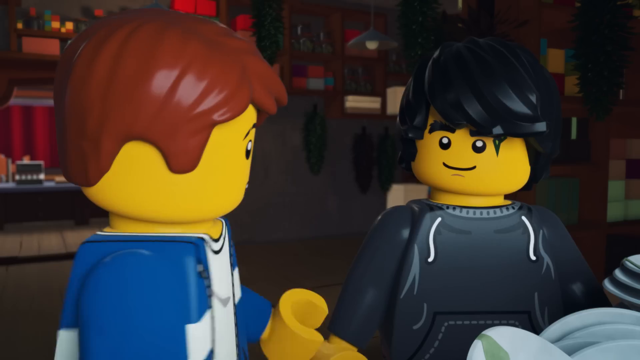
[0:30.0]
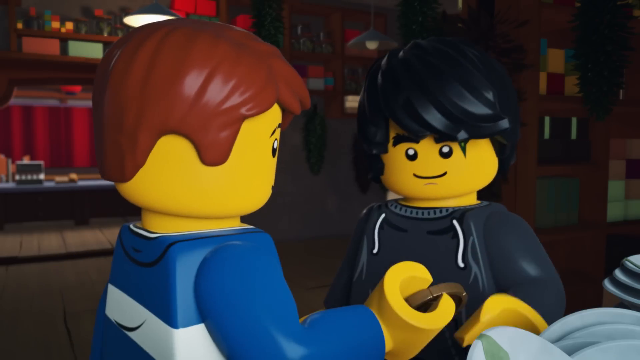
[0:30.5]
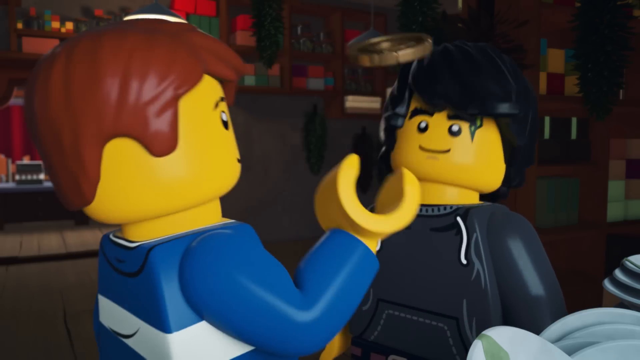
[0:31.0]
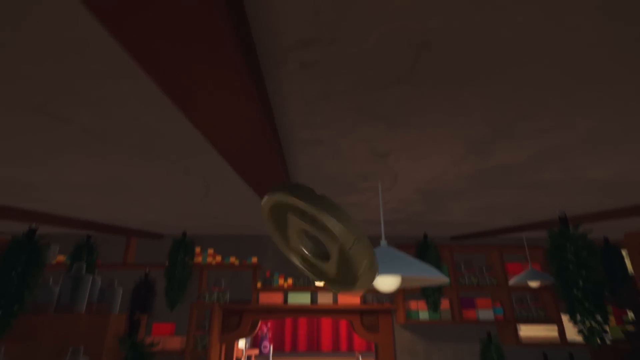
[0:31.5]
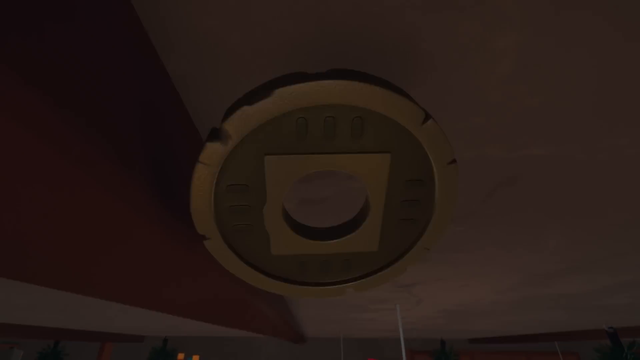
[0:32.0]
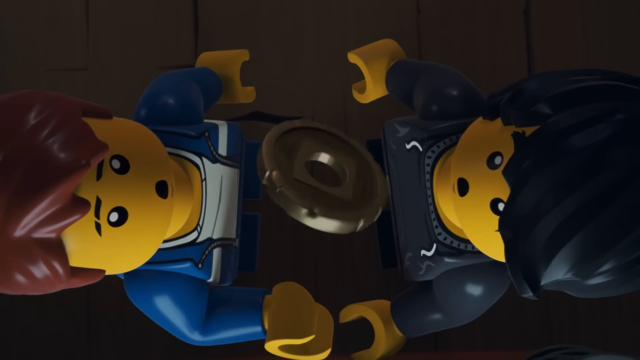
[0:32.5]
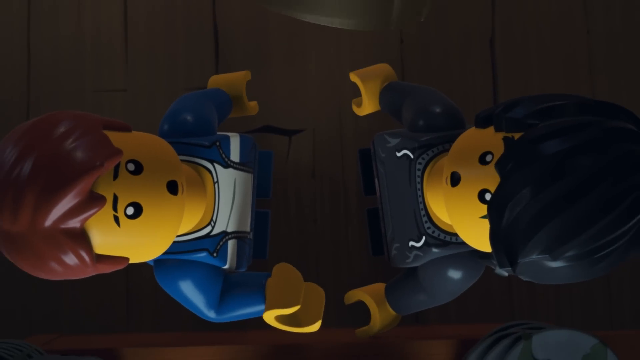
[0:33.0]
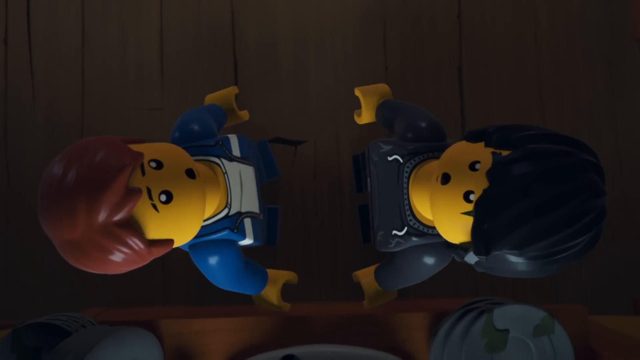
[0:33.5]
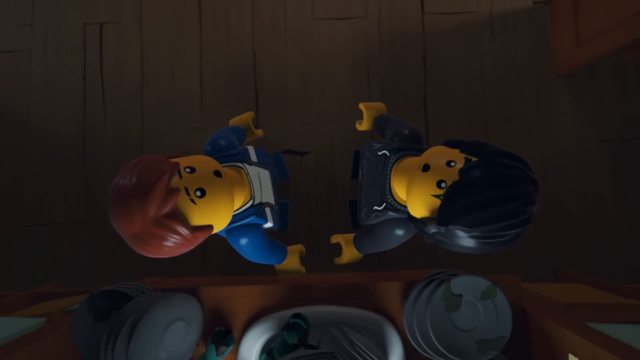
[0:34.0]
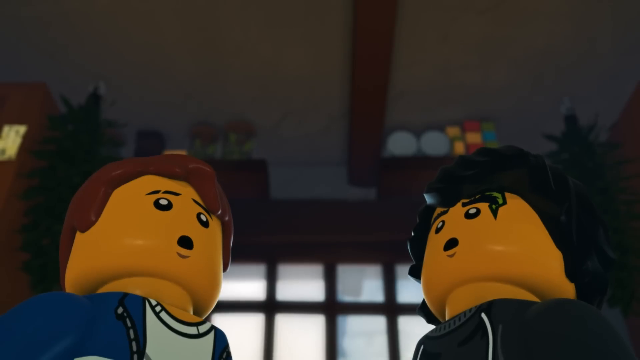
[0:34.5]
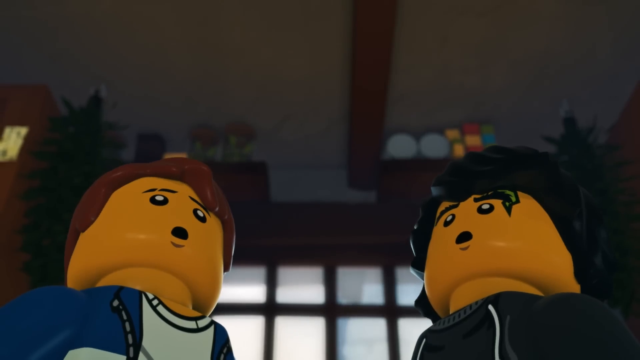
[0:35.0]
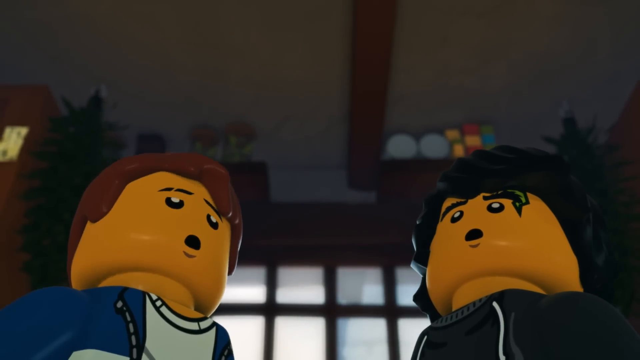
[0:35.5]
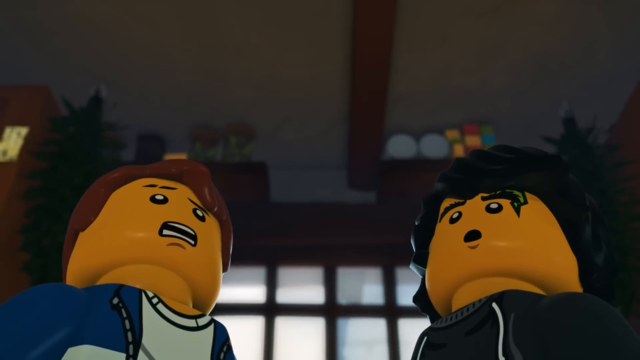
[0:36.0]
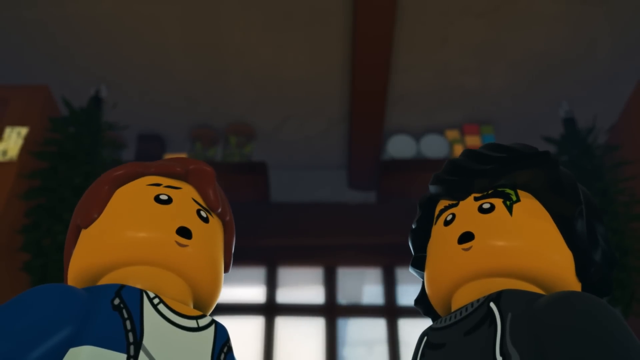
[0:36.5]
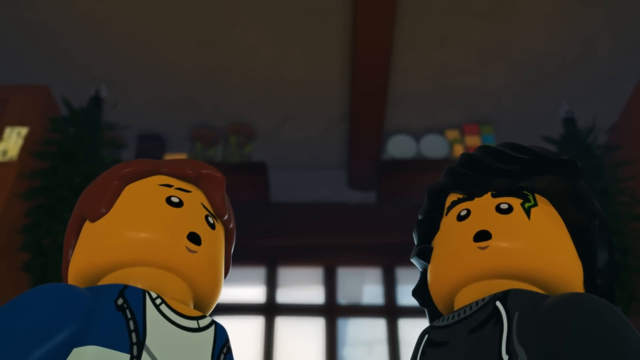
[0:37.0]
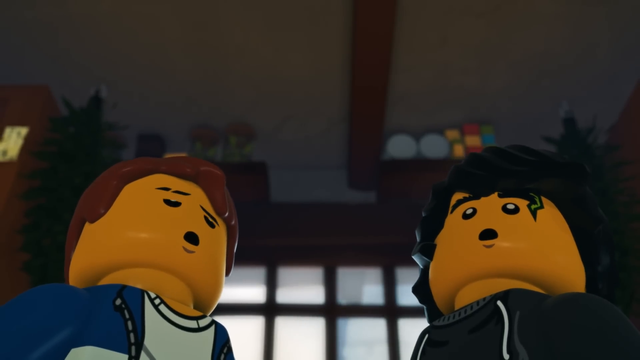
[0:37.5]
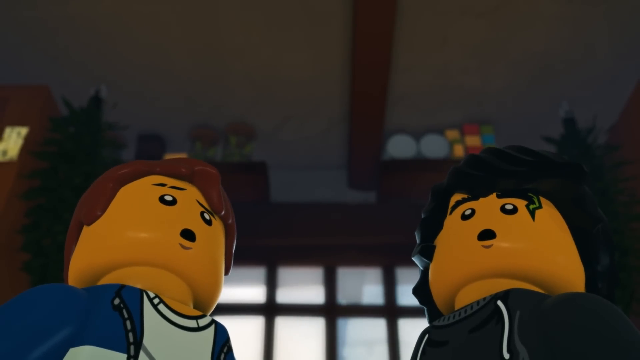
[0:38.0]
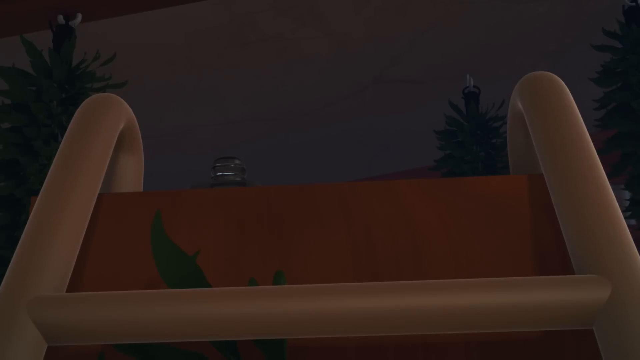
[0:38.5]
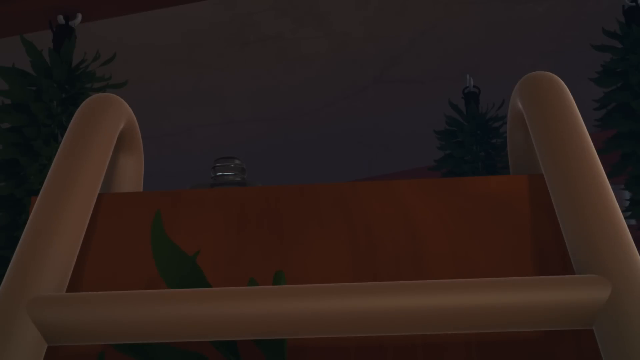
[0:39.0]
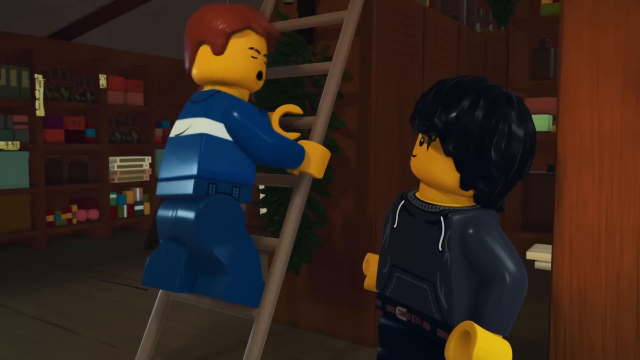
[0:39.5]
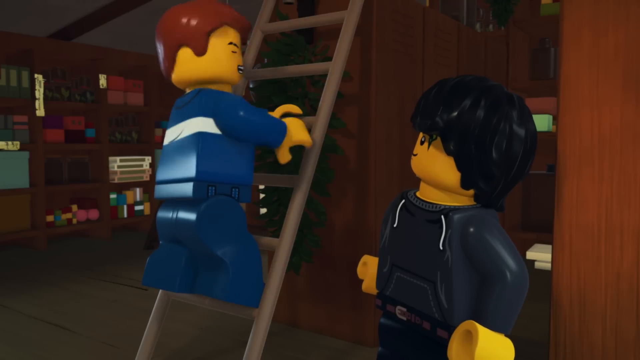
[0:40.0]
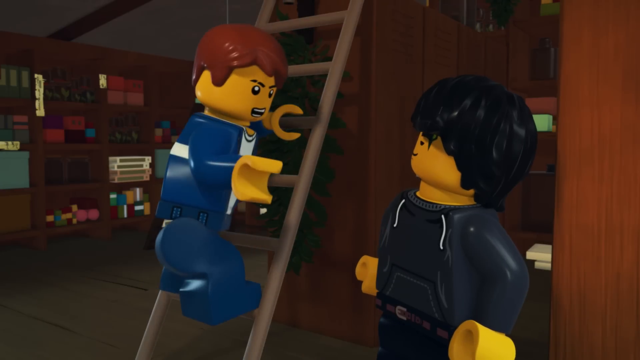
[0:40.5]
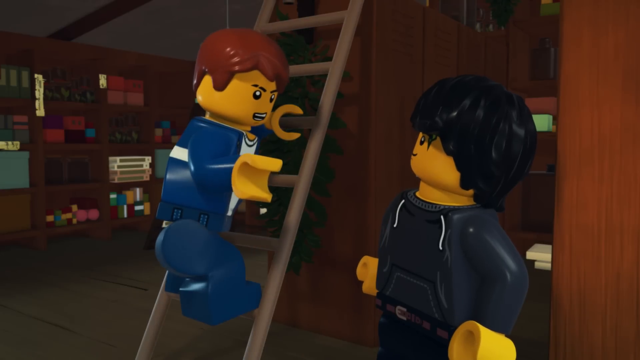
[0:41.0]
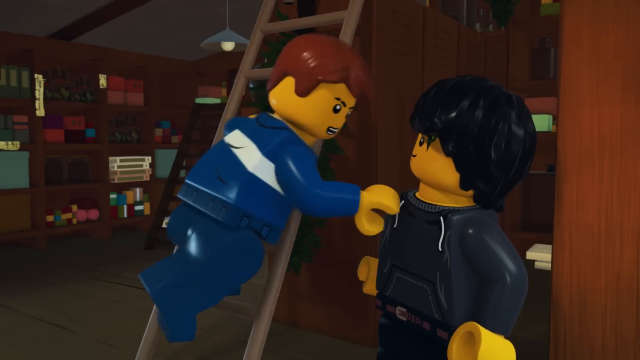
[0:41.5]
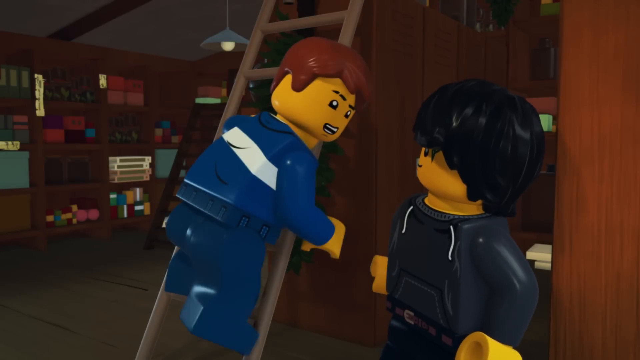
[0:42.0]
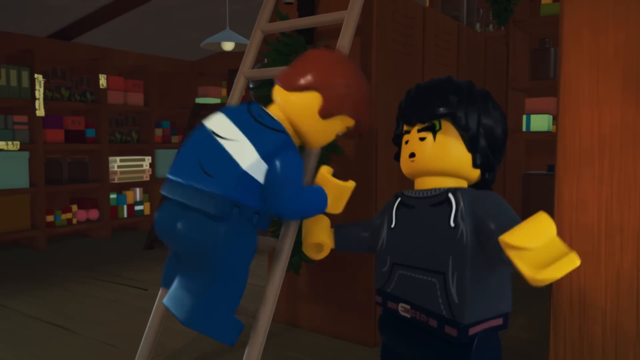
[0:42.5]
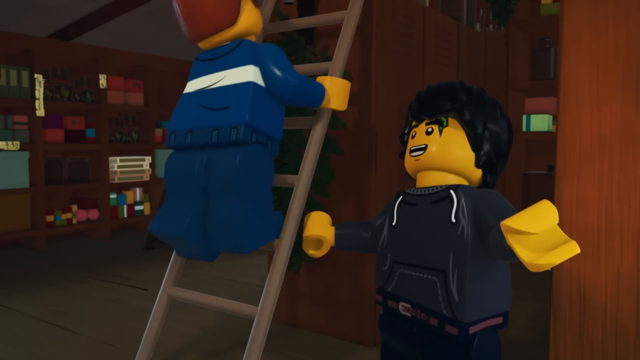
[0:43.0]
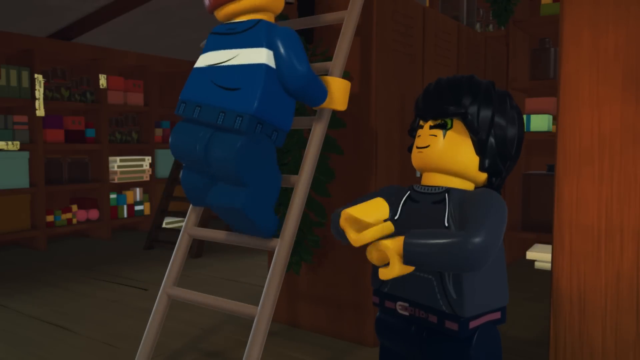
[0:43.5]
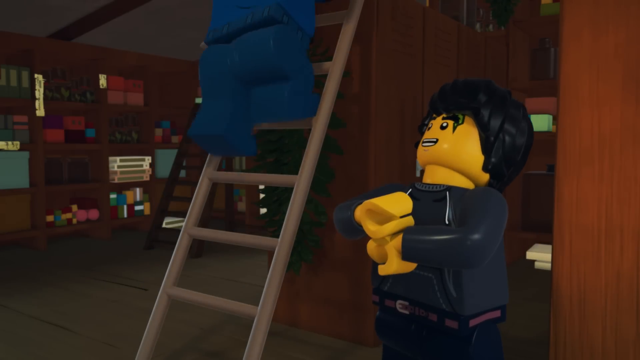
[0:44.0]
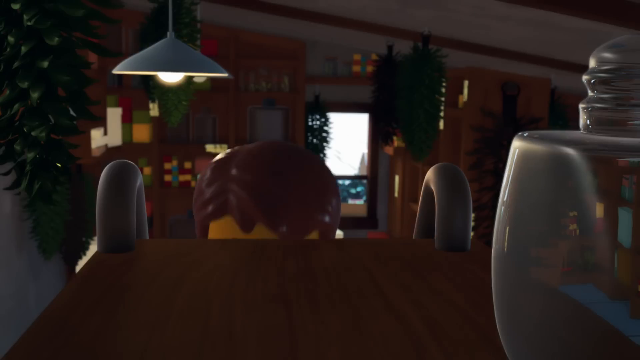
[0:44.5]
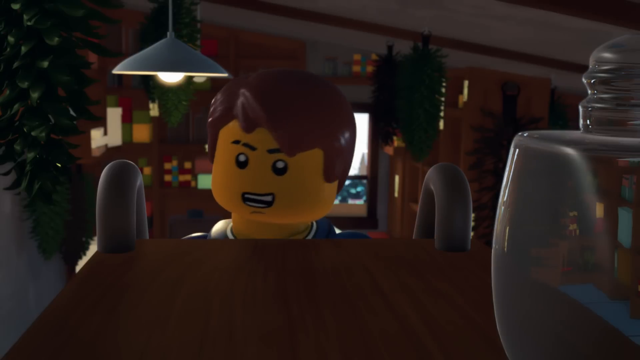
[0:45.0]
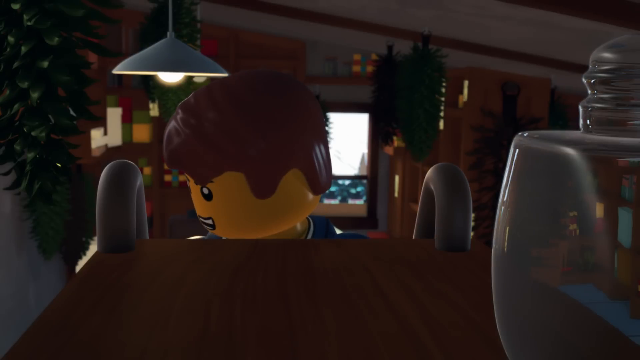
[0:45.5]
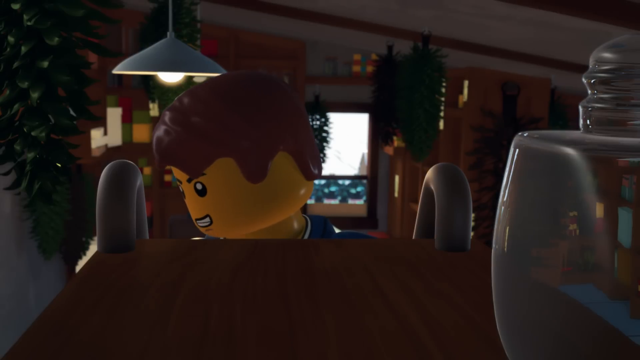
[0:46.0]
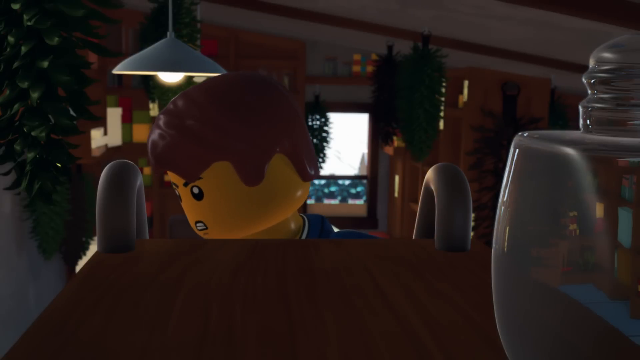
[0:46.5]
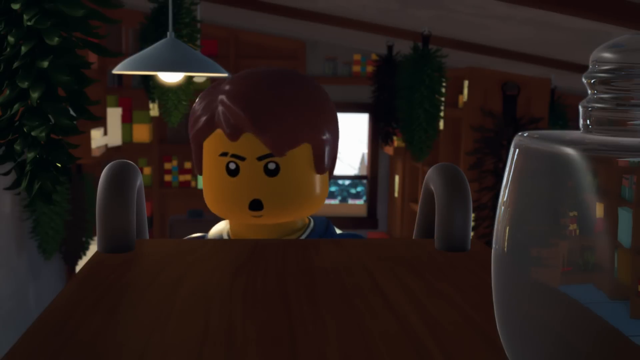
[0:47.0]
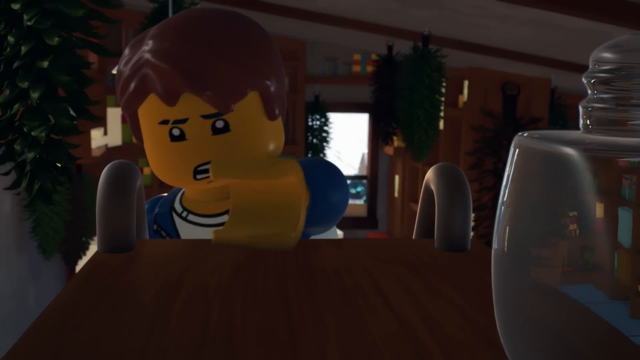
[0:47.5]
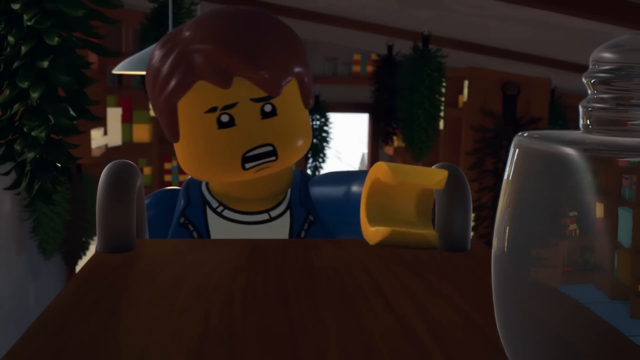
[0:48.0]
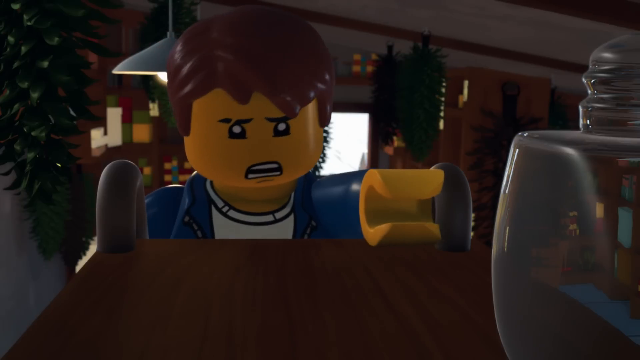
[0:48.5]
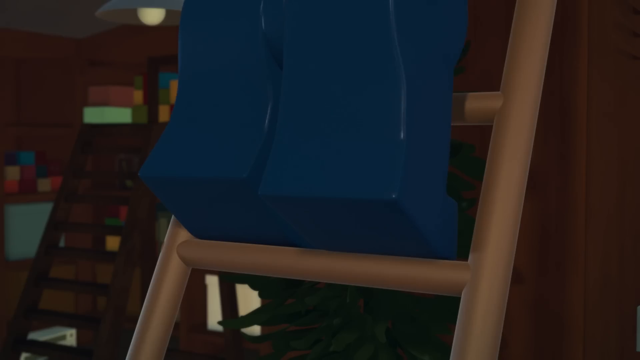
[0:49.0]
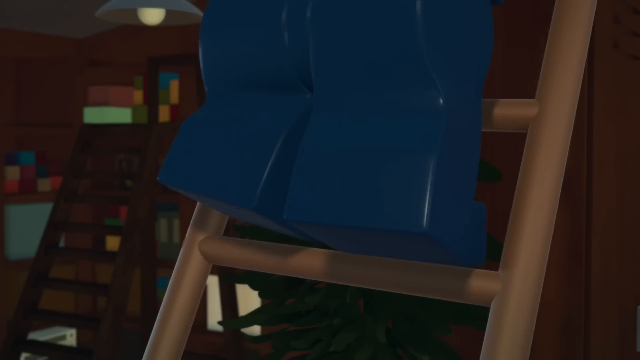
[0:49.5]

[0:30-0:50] The two characters do heads and tails, and the coin lands elsewhere. They get up a ladder, and the character wearing blue climbs up while the other one waits at the bottom to look for the coin.